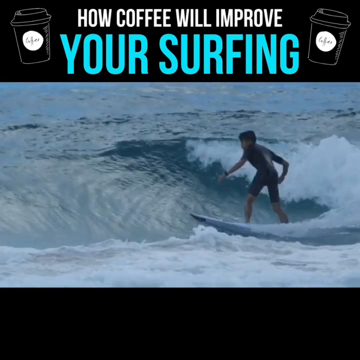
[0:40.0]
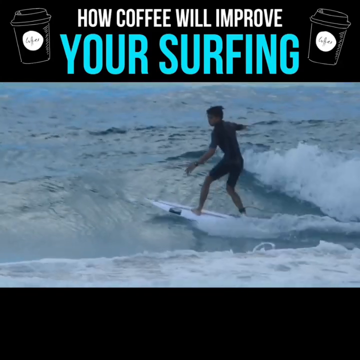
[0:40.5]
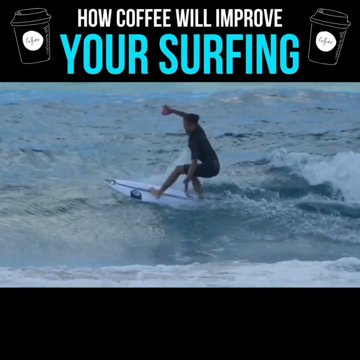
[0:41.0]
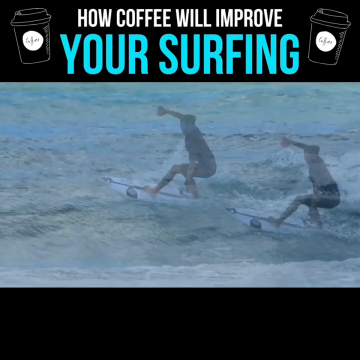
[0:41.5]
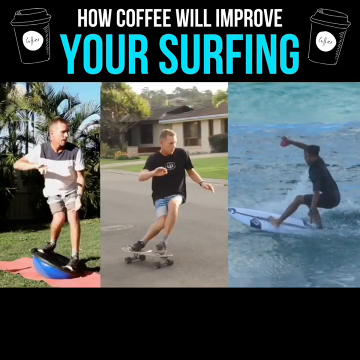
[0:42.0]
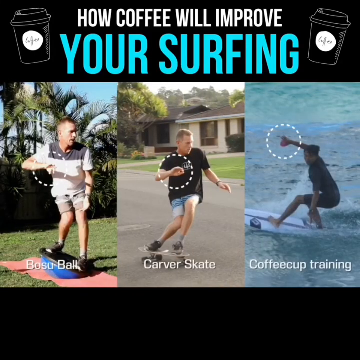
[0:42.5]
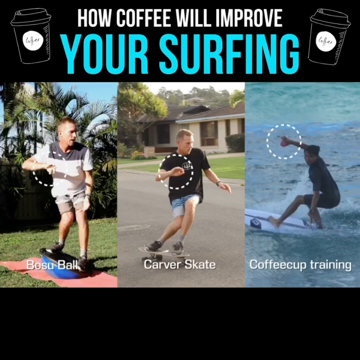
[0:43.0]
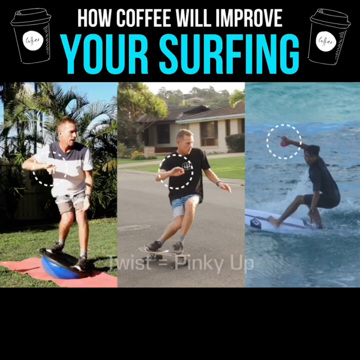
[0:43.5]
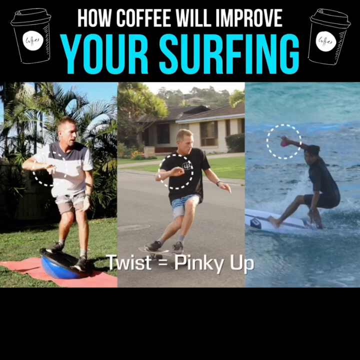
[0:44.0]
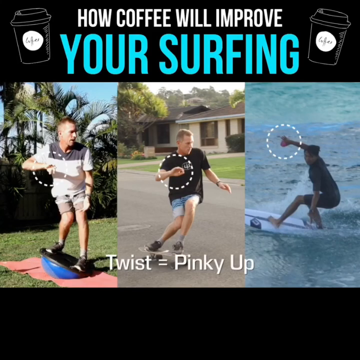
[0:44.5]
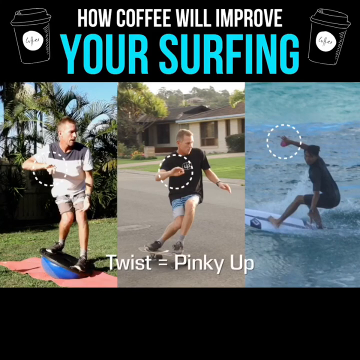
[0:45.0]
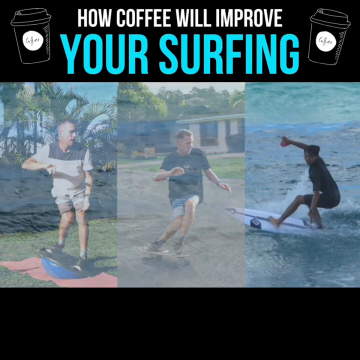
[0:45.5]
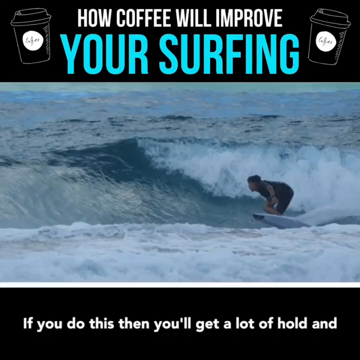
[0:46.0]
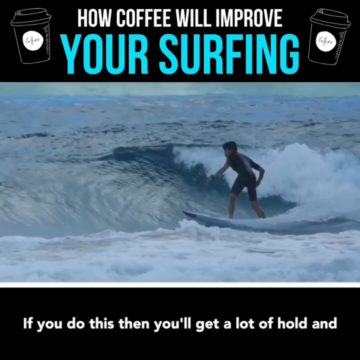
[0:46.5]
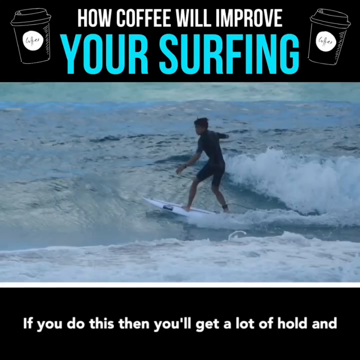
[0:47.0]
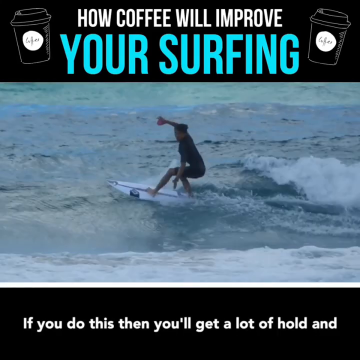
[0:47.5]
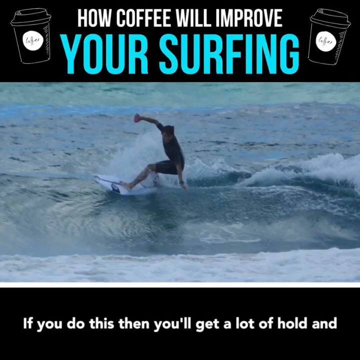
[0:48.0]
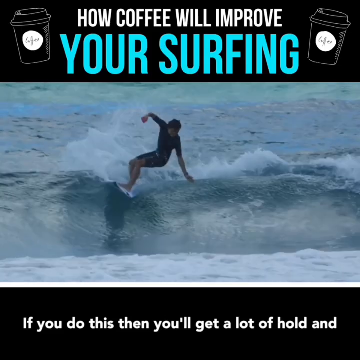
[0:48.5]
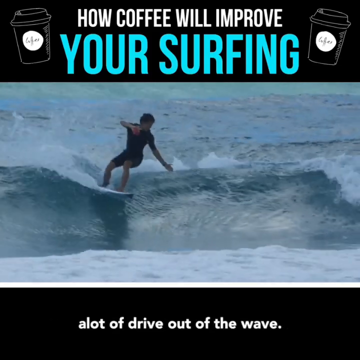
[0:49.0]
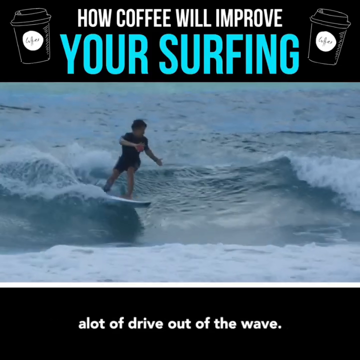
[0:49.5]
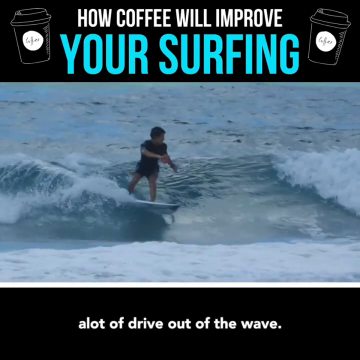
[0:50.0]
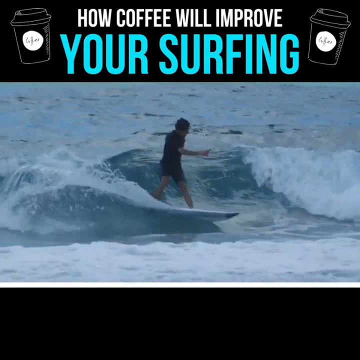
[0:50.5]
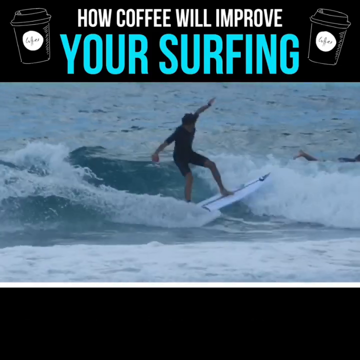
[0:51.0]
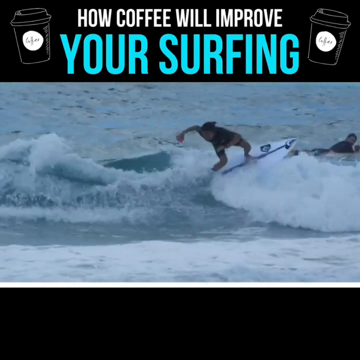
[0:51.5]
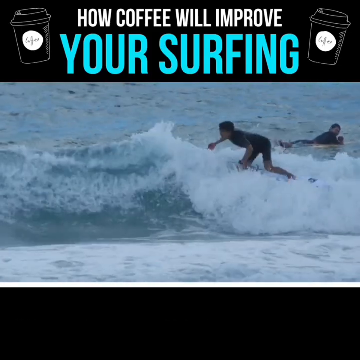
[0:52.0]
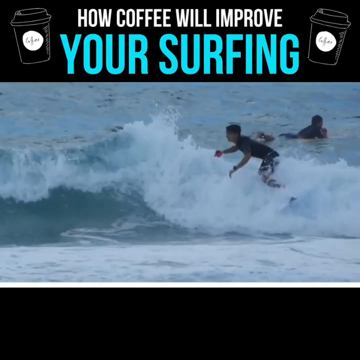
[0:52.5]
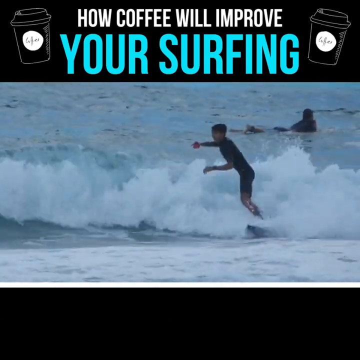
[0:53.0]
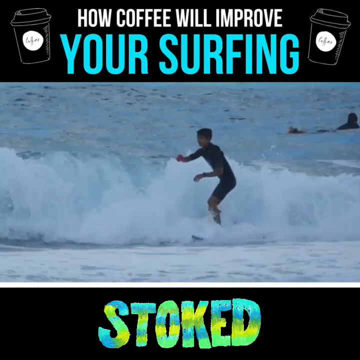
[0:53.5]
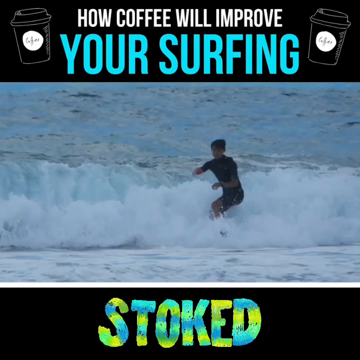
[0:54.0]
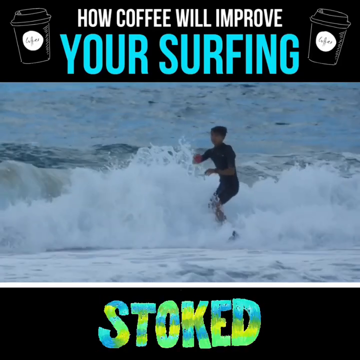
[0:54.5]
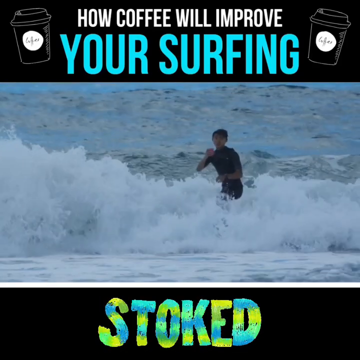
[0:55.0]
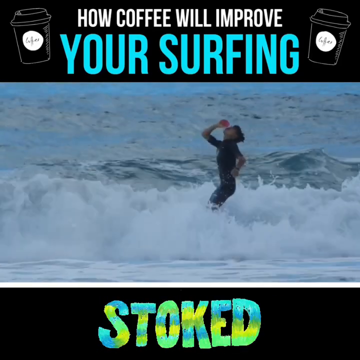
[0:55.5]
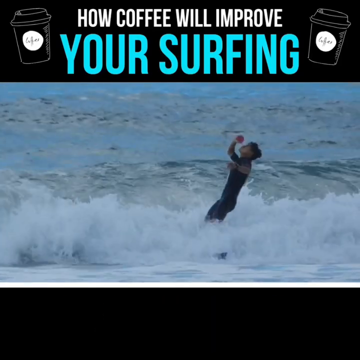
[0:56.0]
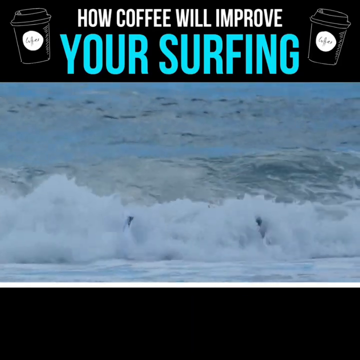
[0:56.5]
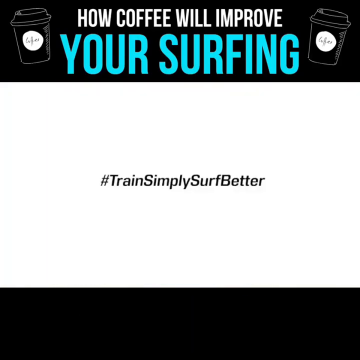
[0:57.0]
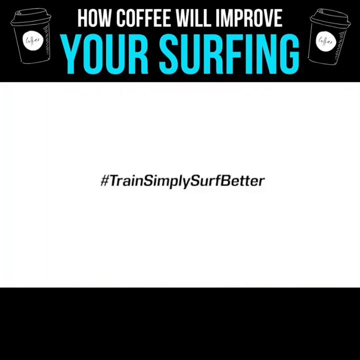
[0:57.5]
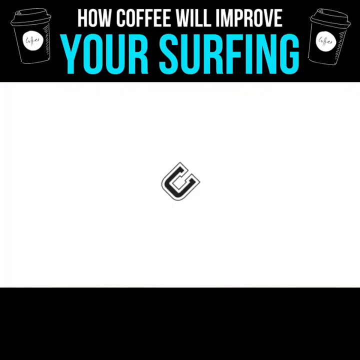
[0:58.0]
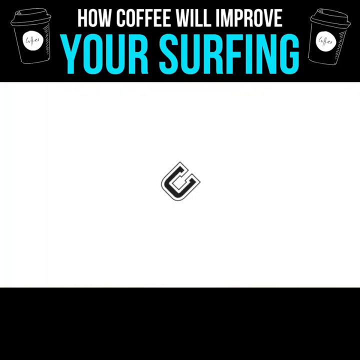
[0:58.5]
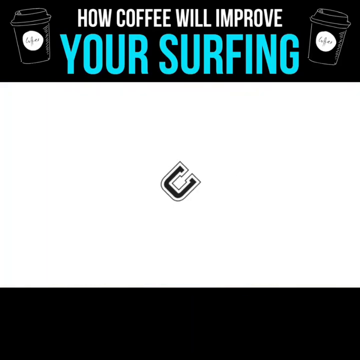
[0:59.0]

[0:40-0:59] The surfer is in the middle, with the text "how coffee will improve your surfing" at the top, and this time the bottom black margin is empty. A slow-motion shot shows the man surfing; he is about to turn left as he goes up the wave, raising his right arm upward and his left arm downward to sort of turn toward the camera. Two extra images are then added beside it as a side-by-side comparison. They appear to compare surfing to longboarding, or to practicing longboarding on a platform on top of a yoga-ball-type object. On the left, a man practices in his backyard on an inflatable ball and platform. In the middle, the same man rides his longboard down a street in a neighborhood. The footage pauses on all three images, and dashed-line circles are added on certain parts of each to compare them.